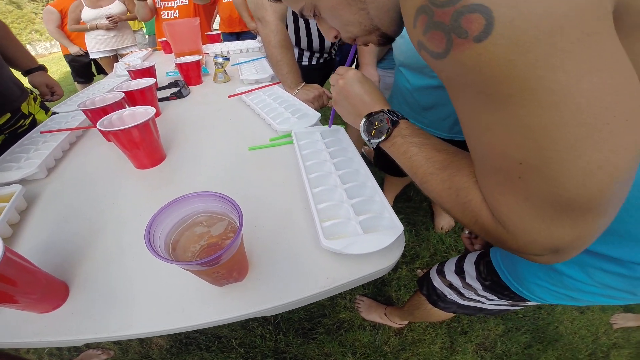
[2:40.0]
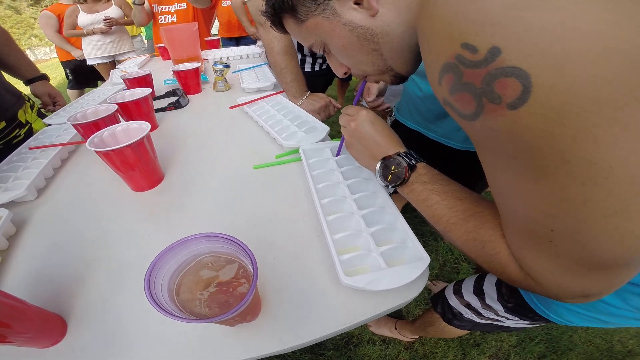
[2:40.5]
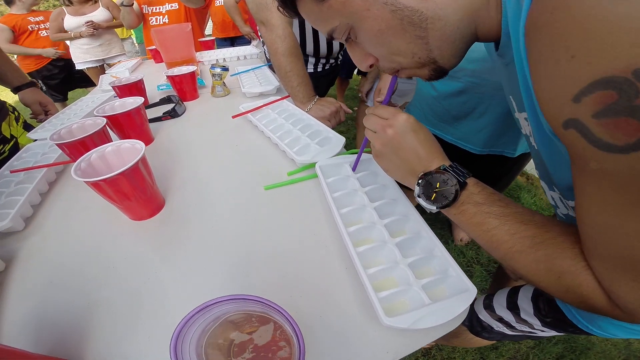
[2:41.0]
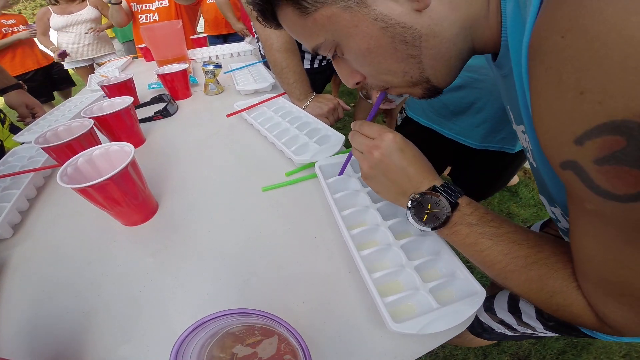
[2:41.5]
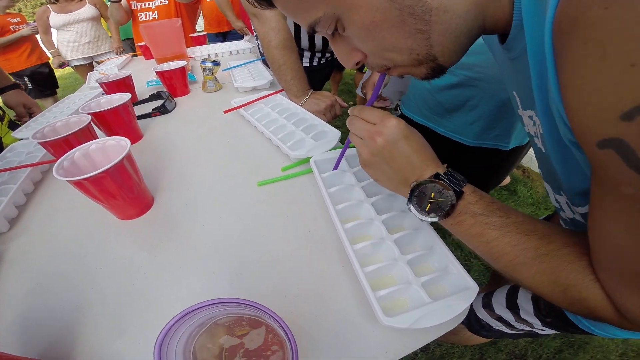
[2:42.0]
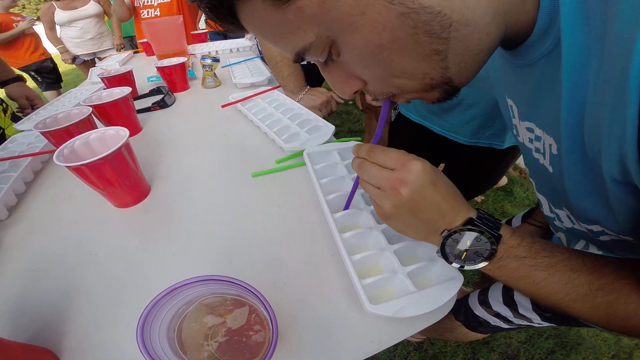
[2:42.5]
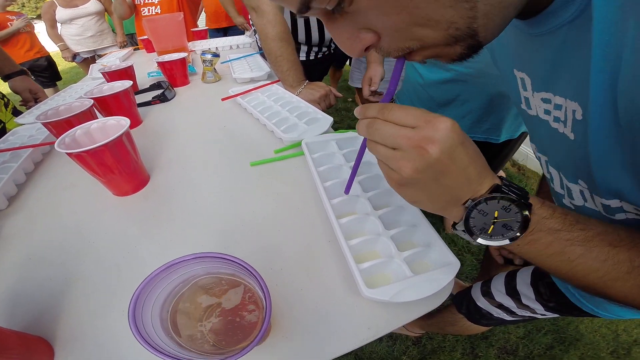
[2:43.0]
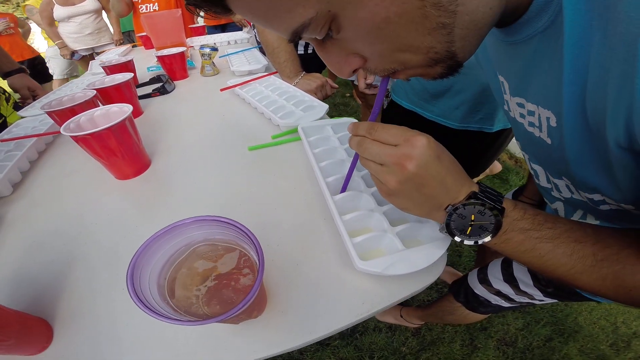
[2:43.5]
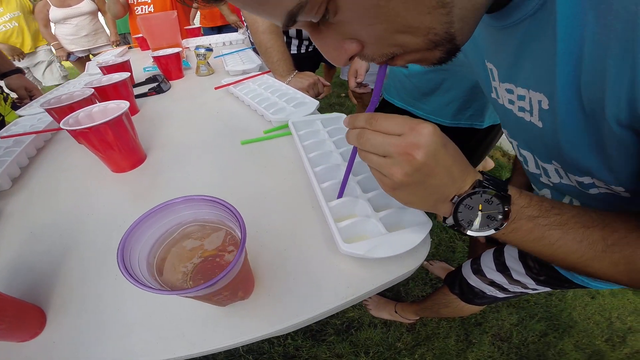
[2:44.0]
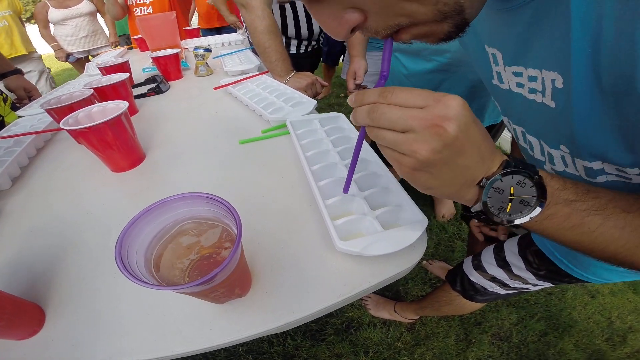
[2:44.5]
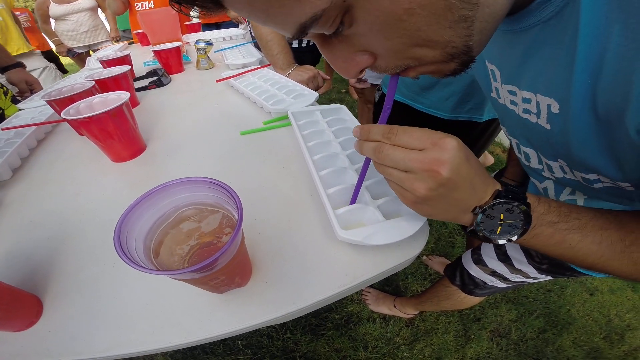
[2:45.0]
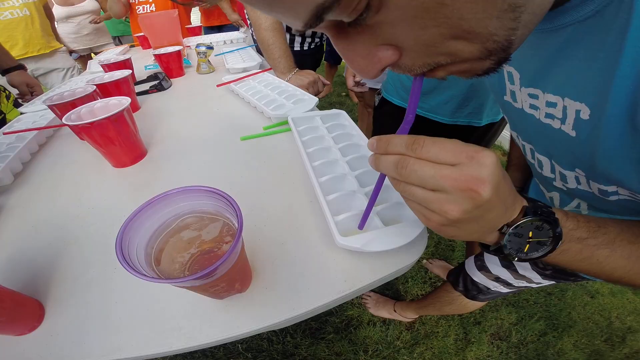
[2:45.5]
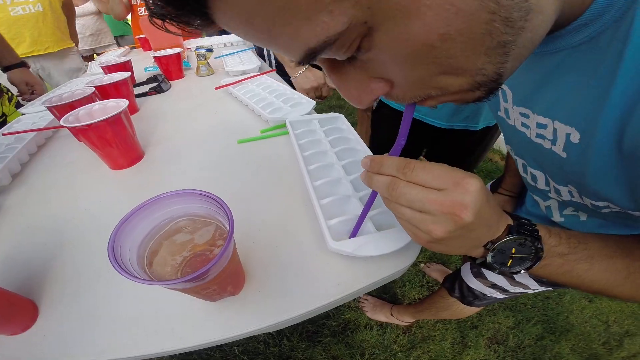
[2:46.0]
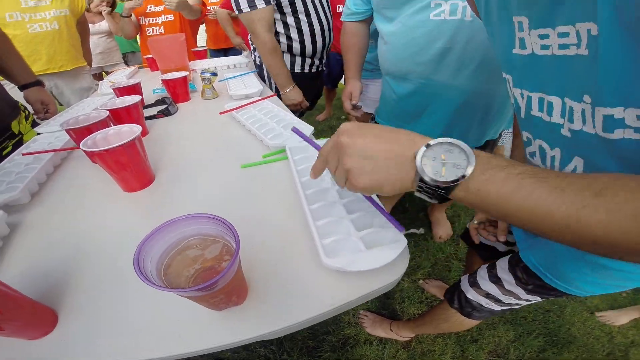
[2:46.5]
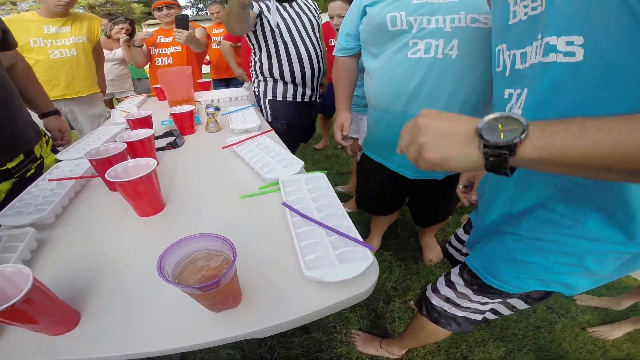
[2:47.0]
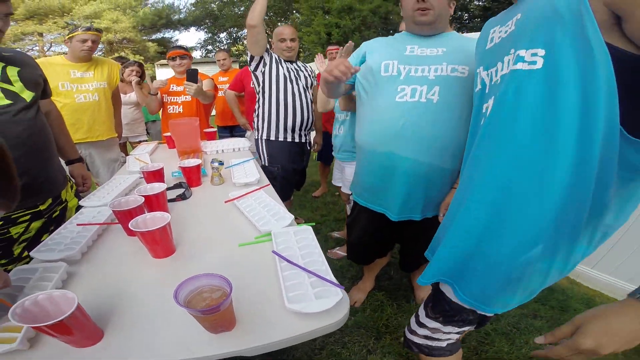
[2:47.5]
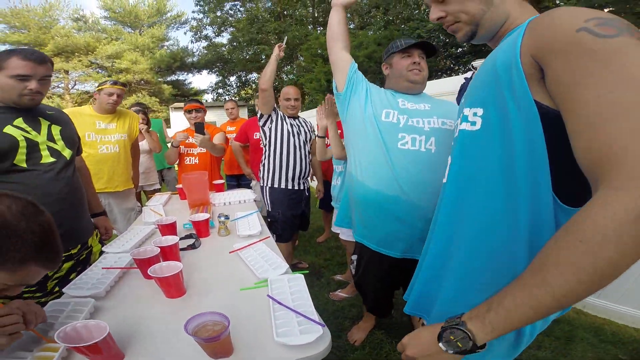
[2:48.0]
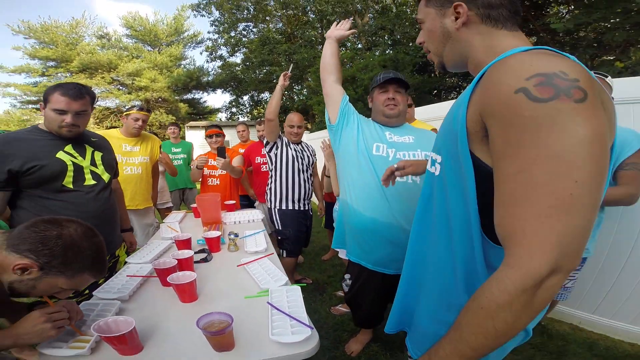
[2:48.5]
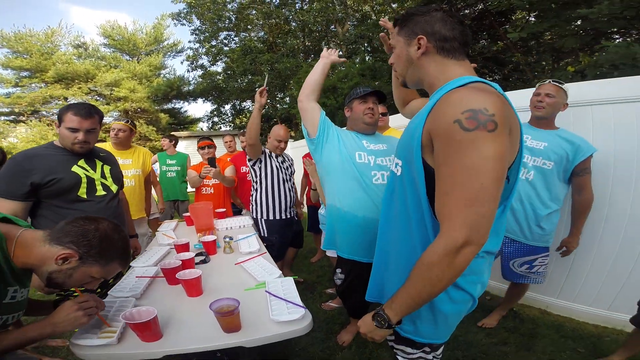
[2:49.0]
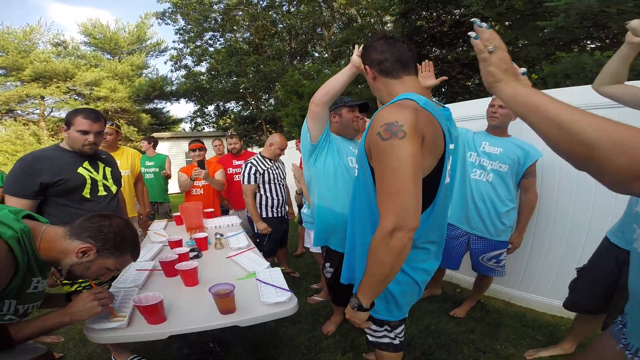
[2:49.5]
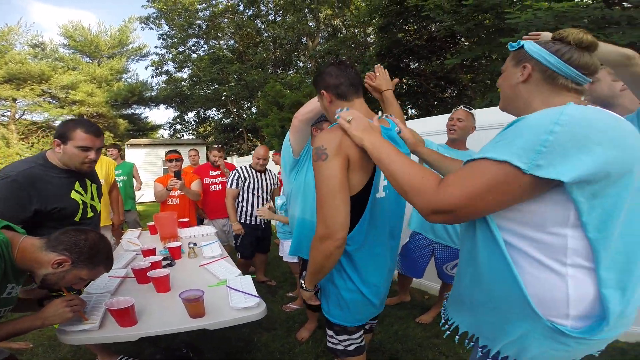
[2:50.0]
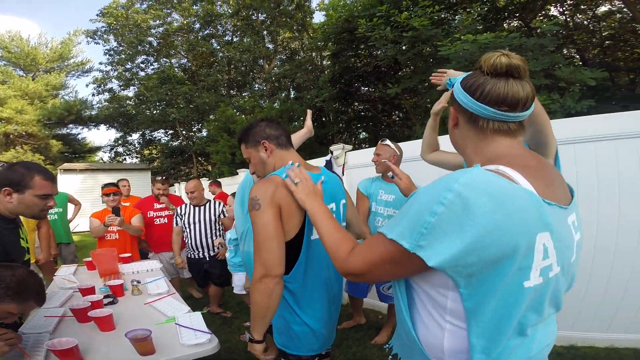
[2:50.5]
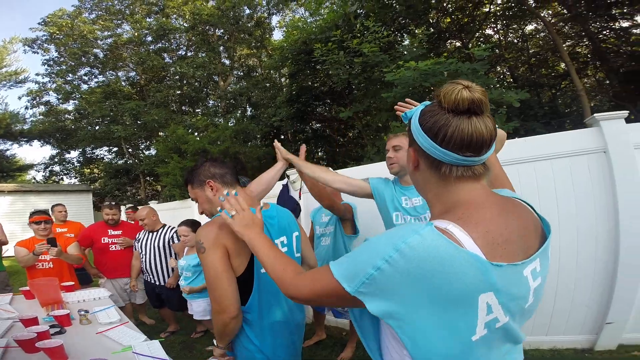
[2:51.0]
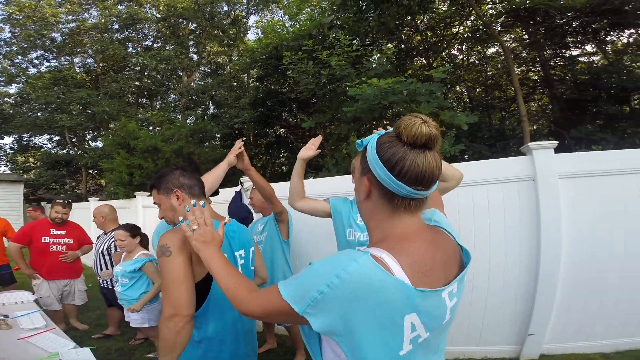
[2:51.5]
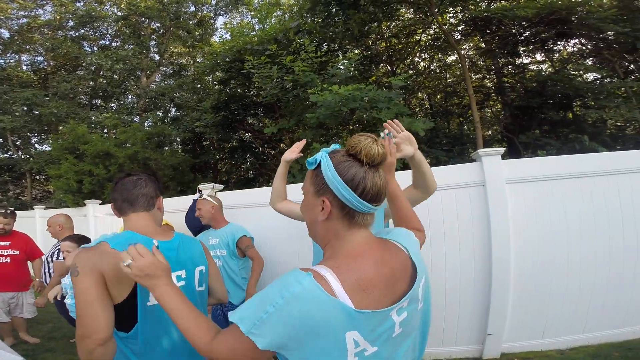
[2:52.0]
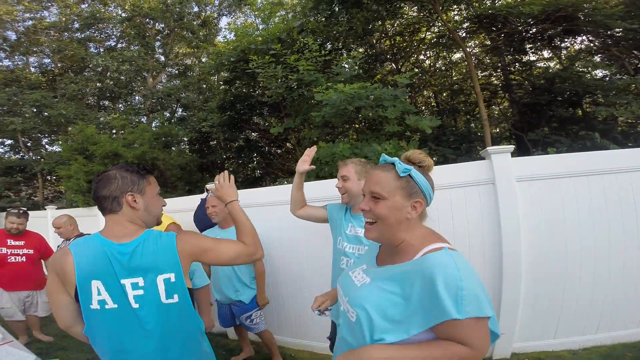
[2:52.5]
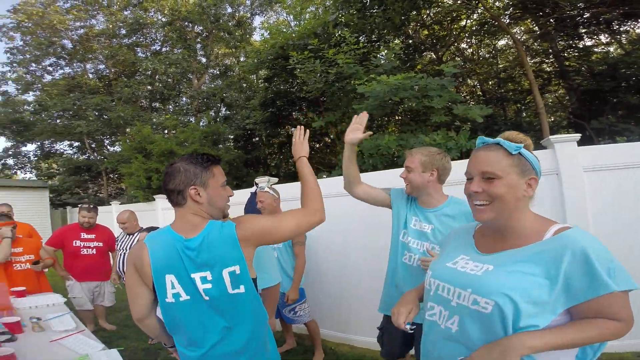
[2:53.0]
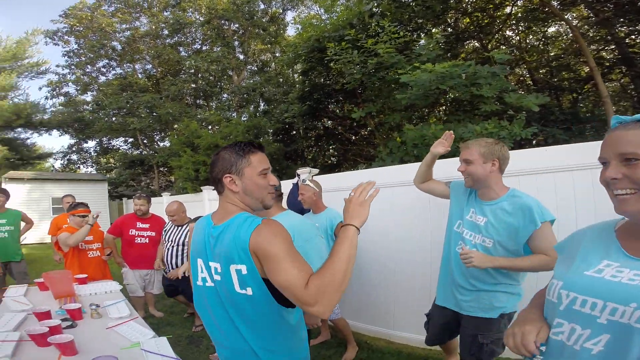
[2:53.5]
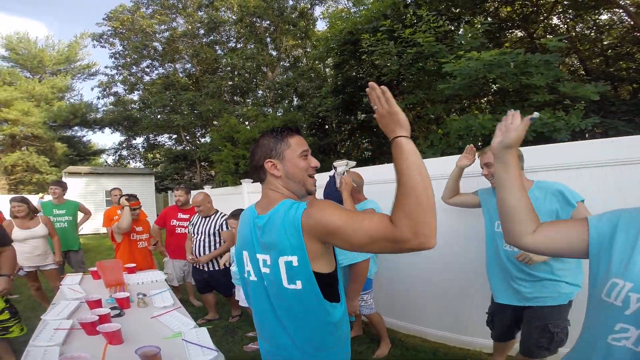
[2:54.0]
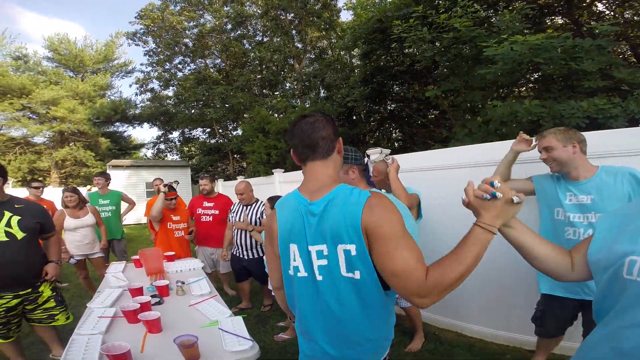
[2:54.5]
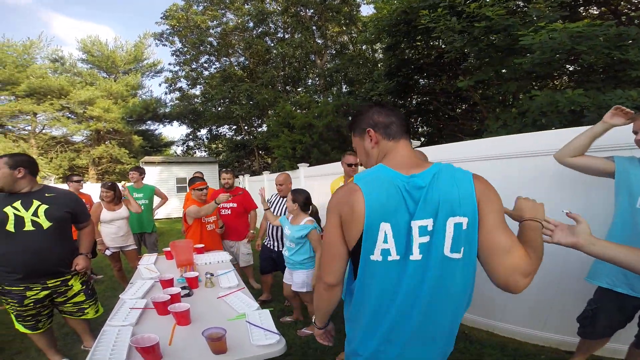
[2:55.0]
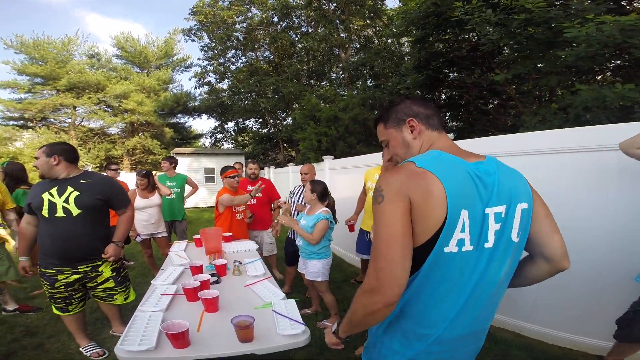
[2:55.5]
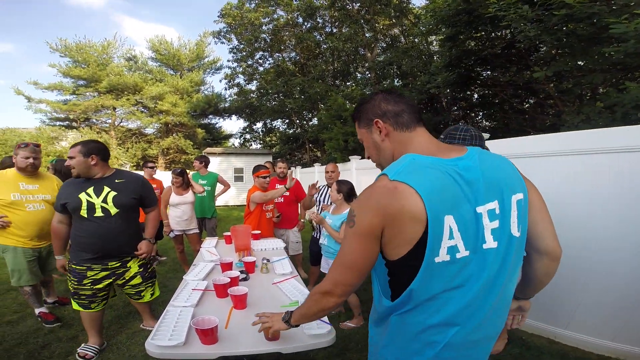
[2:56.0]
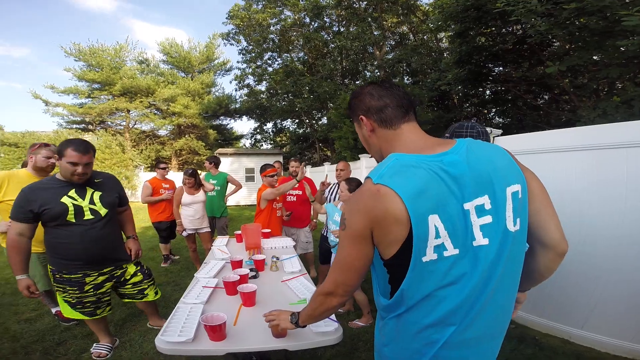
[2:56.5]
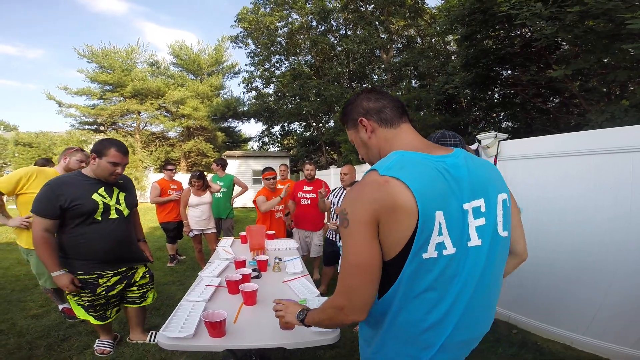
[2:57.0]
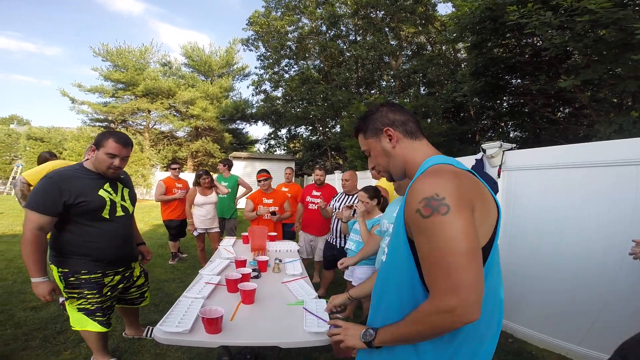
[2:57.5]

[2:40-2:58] A close-up shows the man in the light blue shirt with the tattoo on his left shoulder finishing his tray with his purple straw. He stands up, lays his straw across his white ice cube tray, and turns around to give high fives to his teammates in light blue shirts. A woman comes over and pats him on the back, and with his left hand he grabs the clear cup of beer from the edge of the table. The referee, behind this team, raises his right arm in the air as if to indicate victory. Across from him, the man on the green team, seen on the left side of the image, finishes up; he had only about three or four sections to go, but his team still lost, and he walks away from the table. All the members of the green team walk away from the table. Spectators in the background wear orange, yellow and red shirts; a couple of them wear sunglasses, and one holds a cell phone, making a video. The light blue team has defeated the green team. The heavyset guy in the Yankees jersey, apparently an official, is on the left side of the table, and at the end he is the only one standing there because the green team has left.